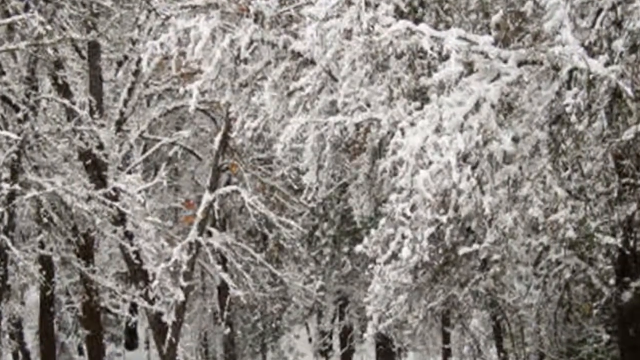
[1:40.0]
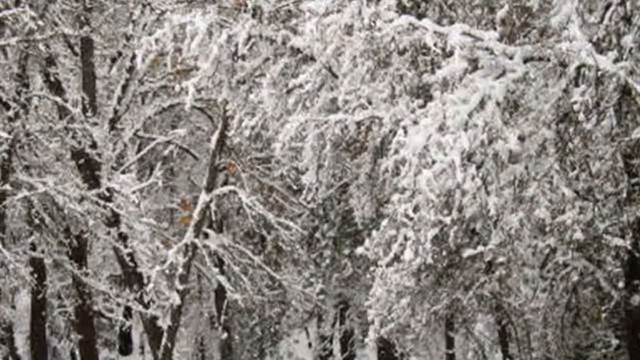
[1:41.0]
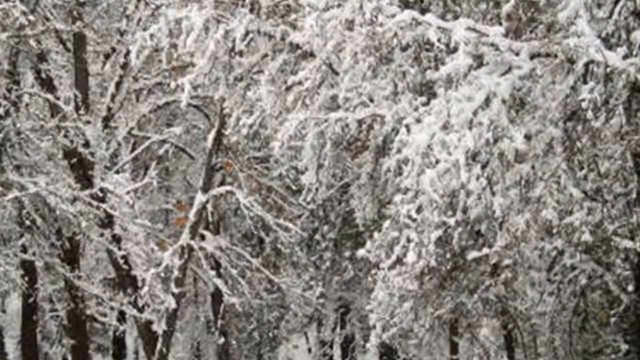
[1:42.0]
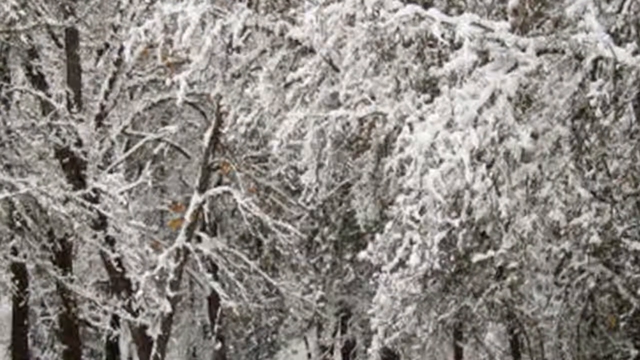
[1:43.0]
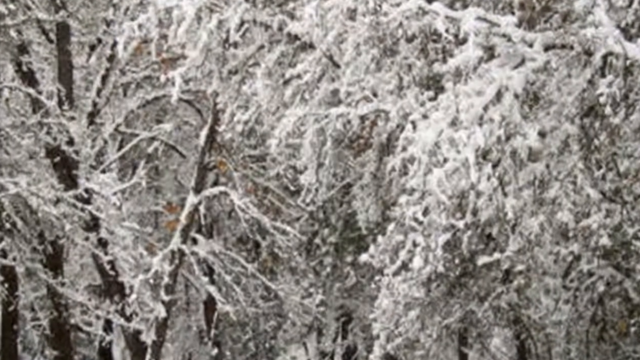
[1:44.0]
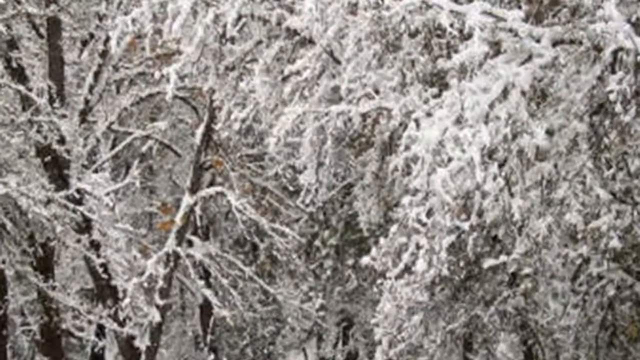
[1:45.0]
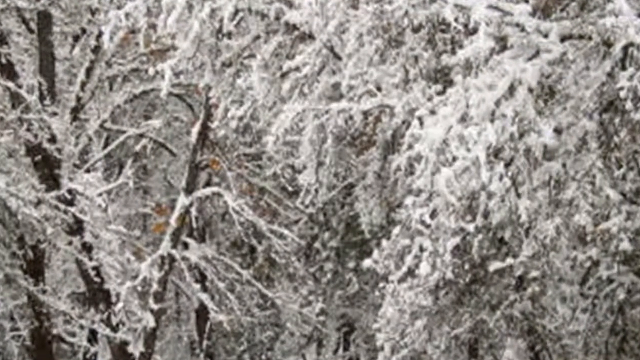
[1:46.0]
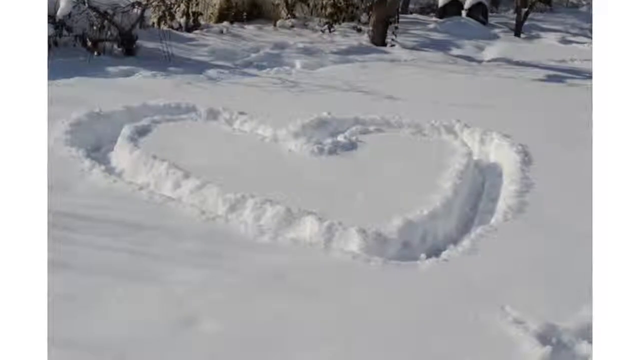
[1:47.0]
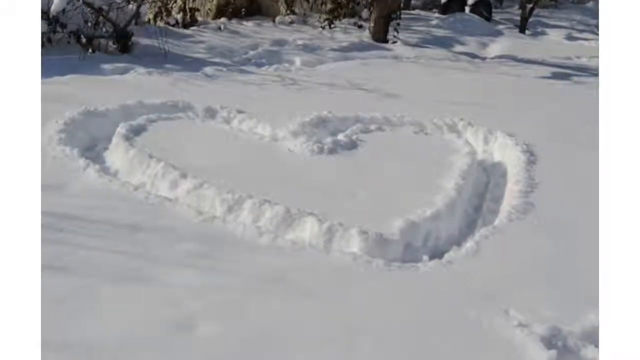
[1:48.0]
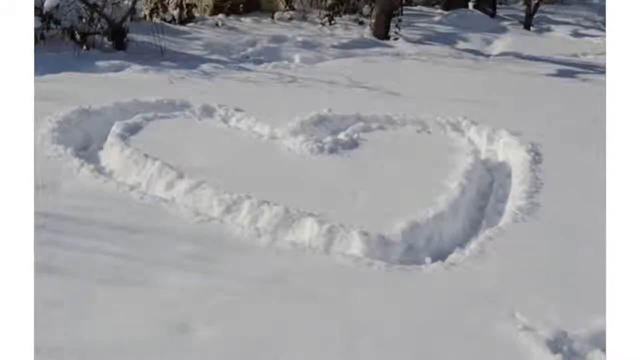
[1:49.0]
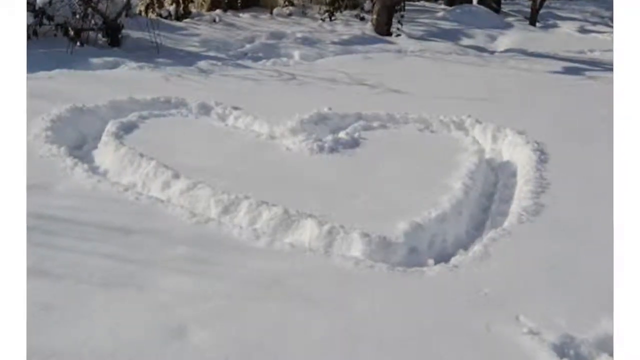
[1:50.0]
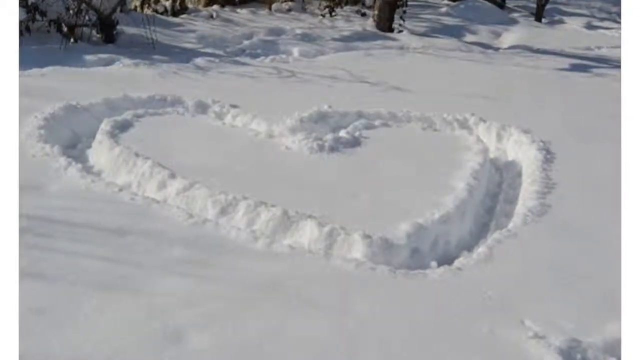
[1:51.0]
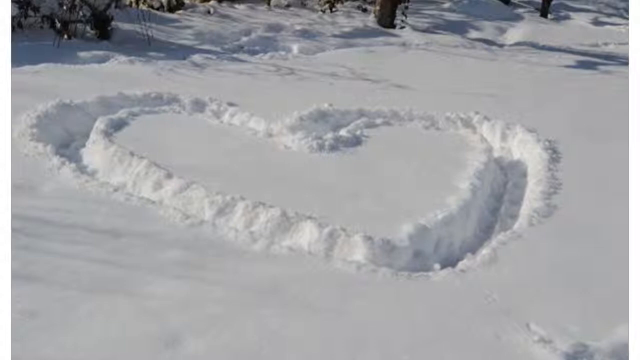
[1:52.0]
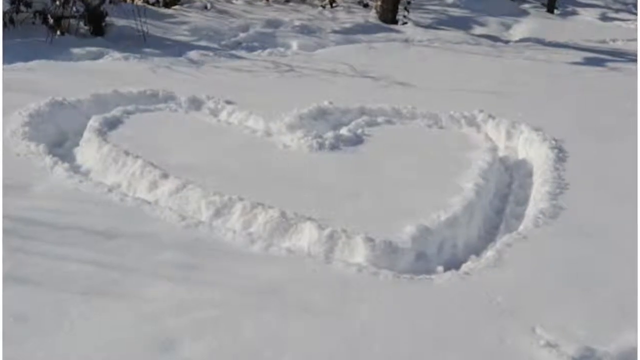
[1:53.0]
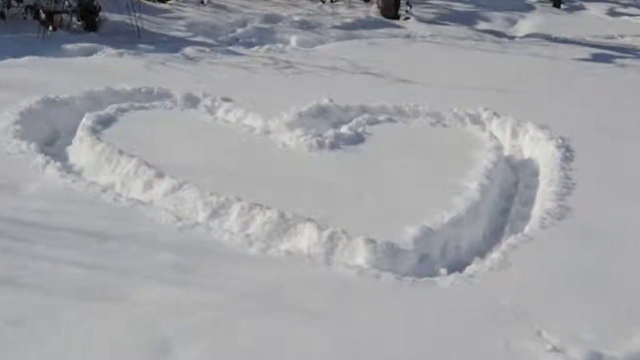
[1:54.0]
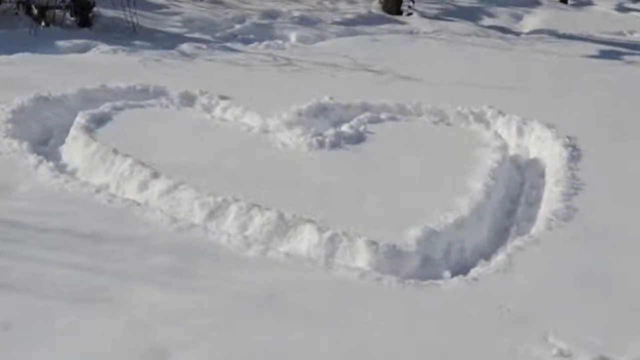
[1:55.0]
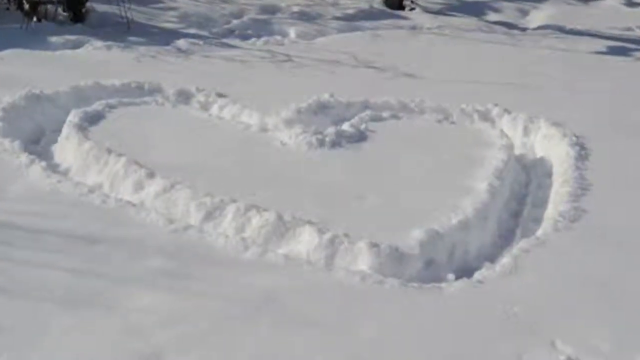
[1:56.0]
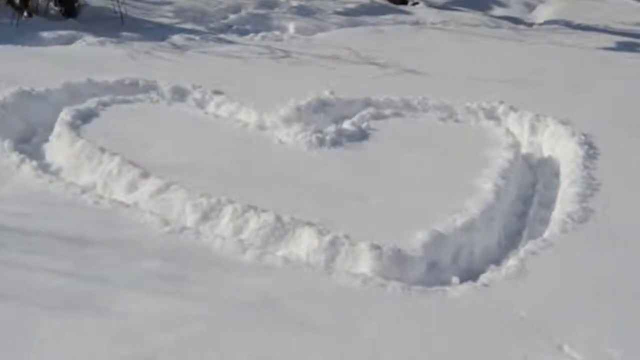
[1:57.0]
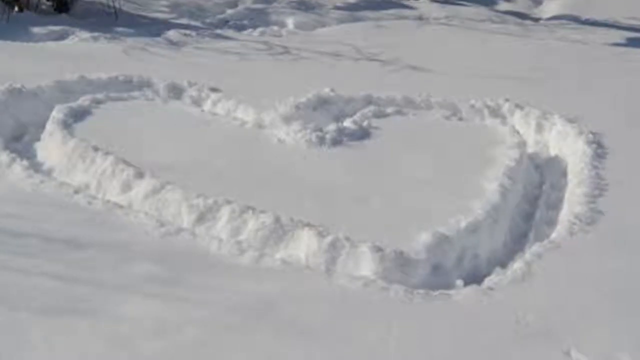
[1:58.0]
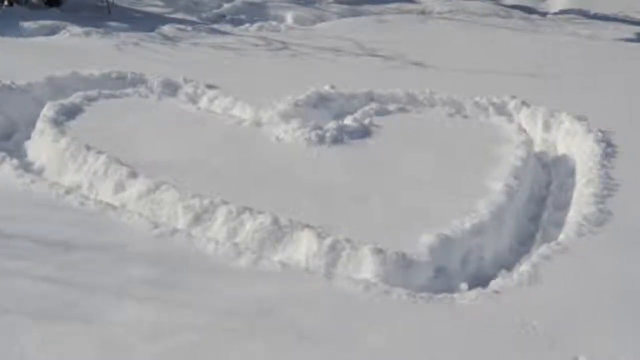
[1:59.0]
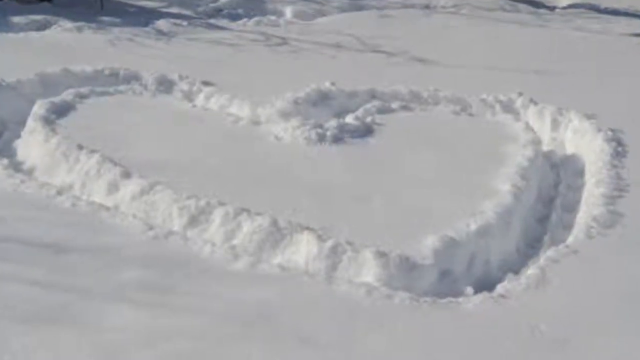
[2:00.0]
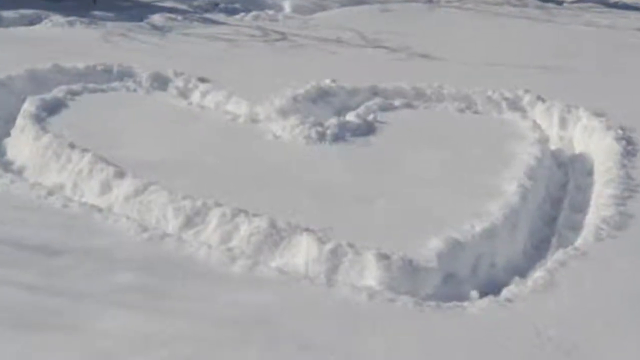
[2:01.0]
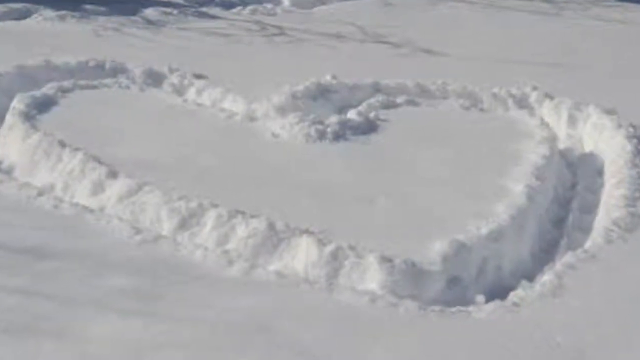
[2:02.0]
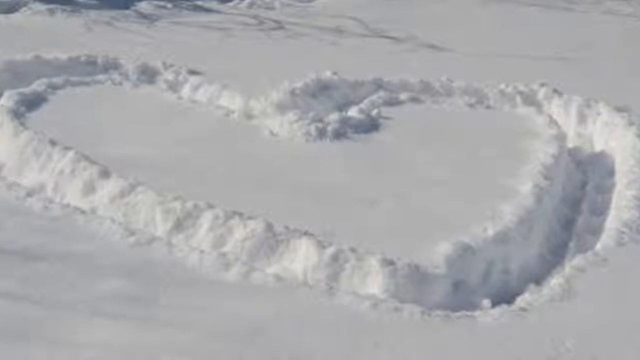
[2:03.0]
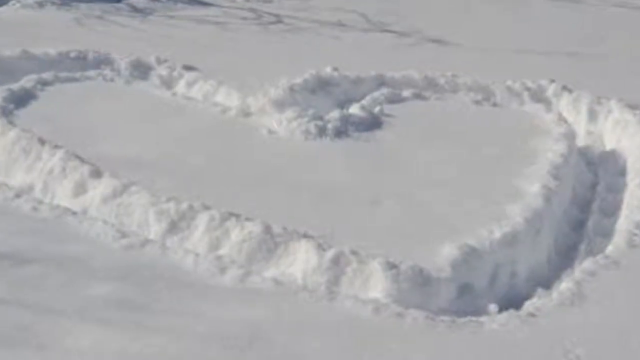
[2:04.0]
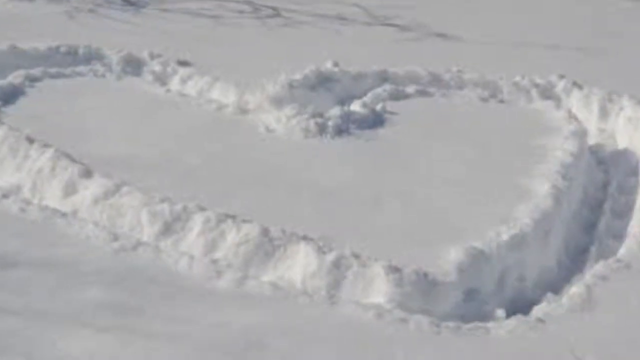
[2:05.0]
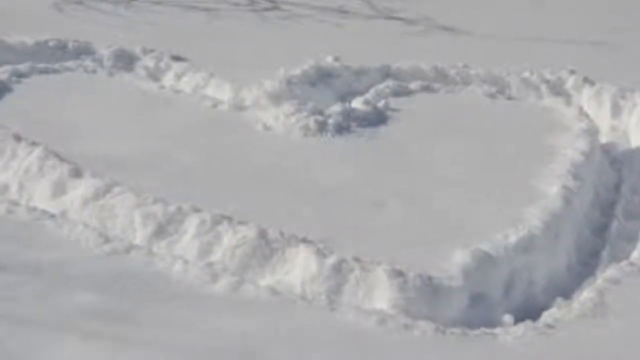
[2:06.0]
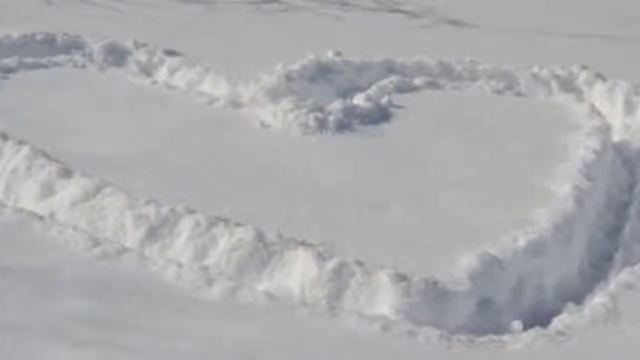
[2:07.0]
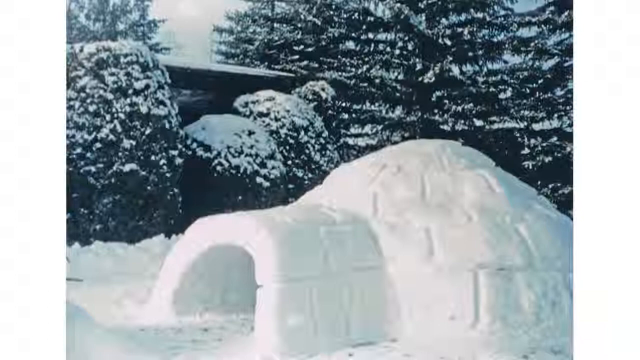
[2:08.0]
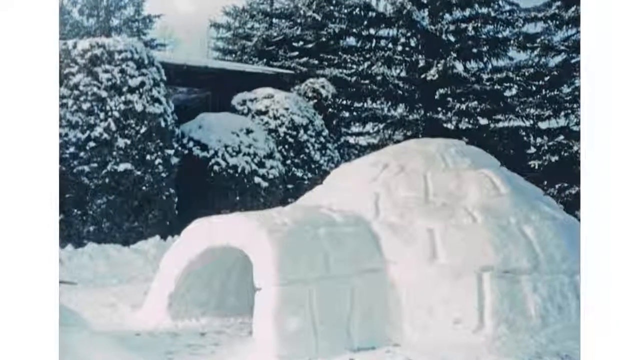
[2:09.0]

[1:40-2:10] A picture apparently shows a very big heart that stands out.